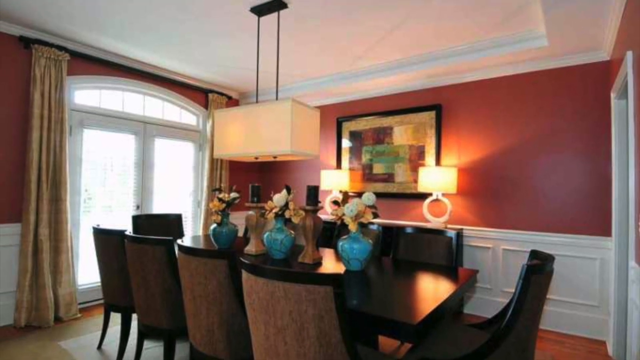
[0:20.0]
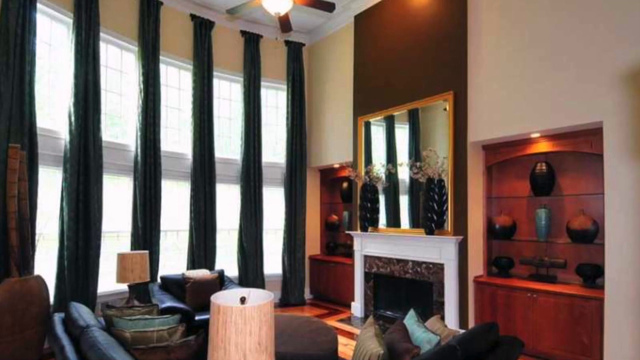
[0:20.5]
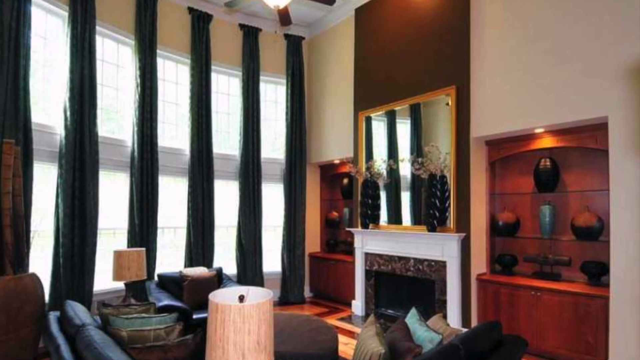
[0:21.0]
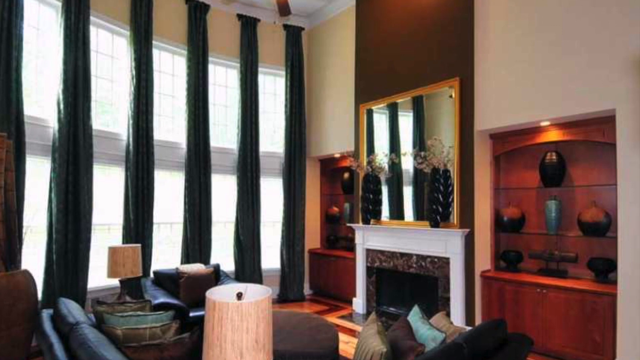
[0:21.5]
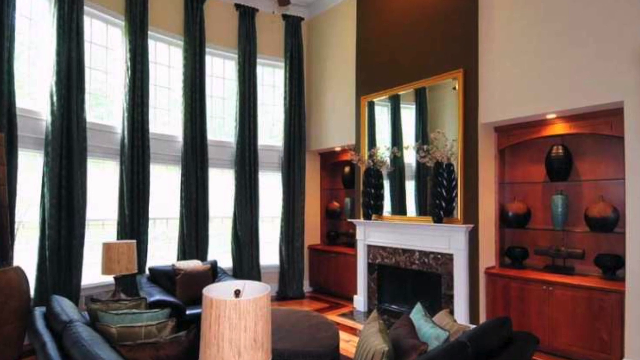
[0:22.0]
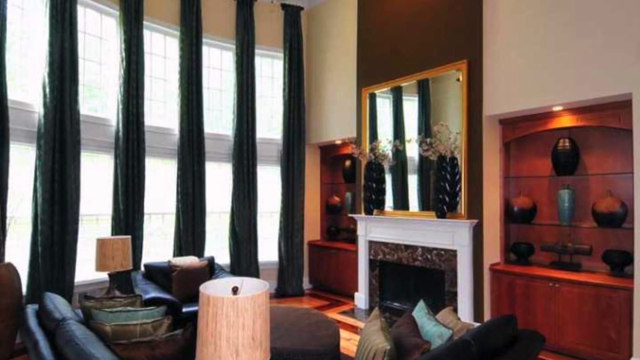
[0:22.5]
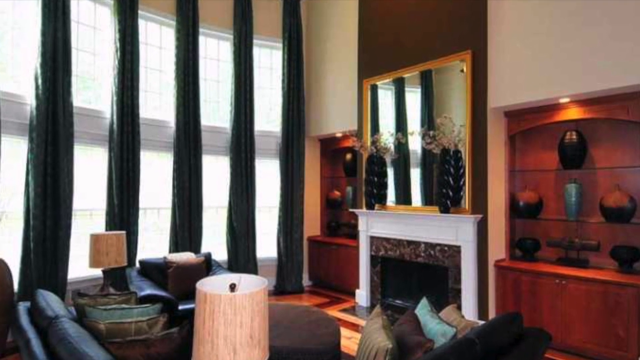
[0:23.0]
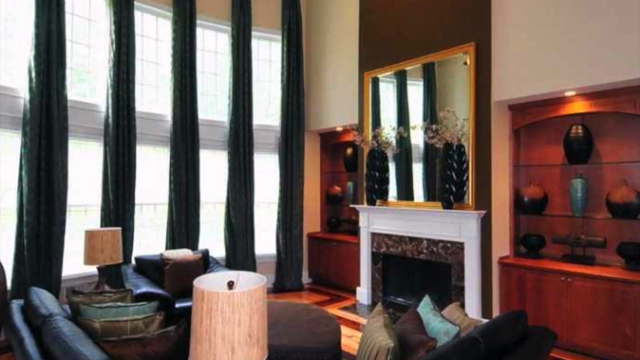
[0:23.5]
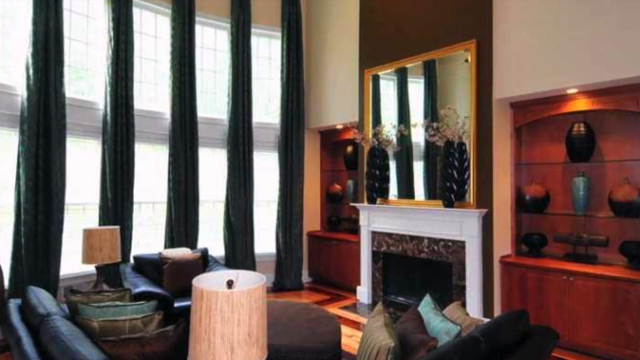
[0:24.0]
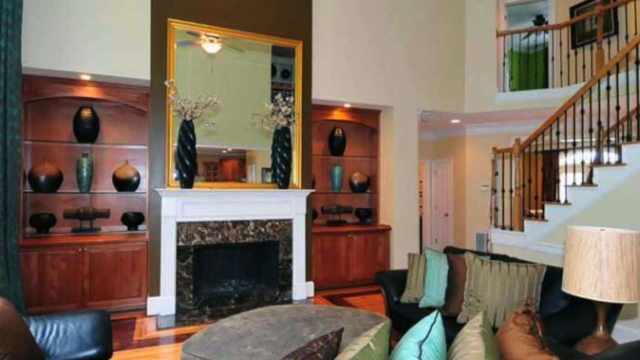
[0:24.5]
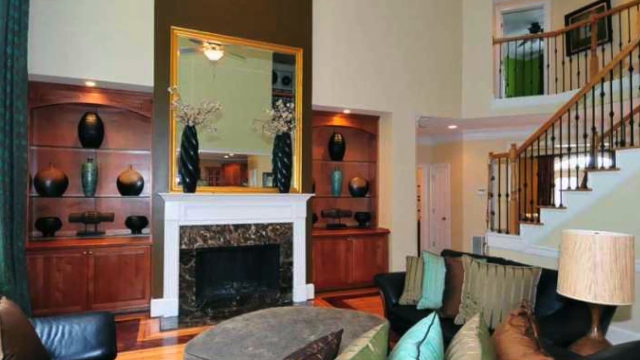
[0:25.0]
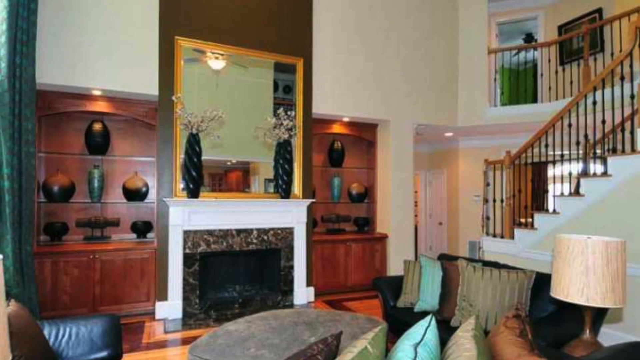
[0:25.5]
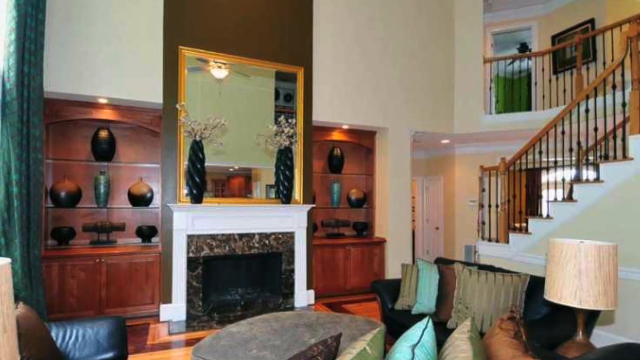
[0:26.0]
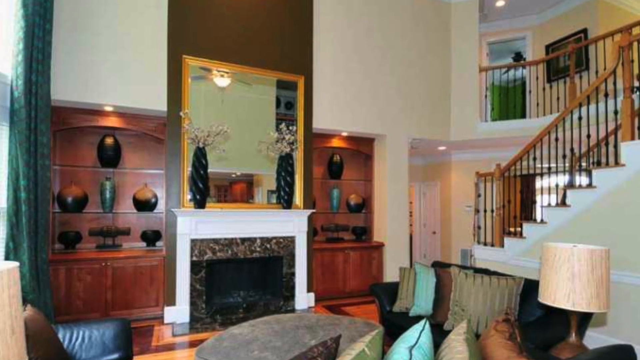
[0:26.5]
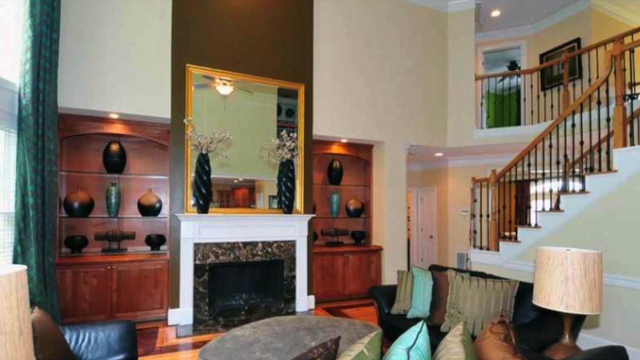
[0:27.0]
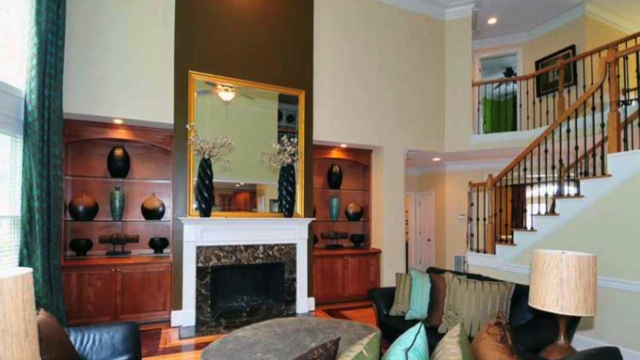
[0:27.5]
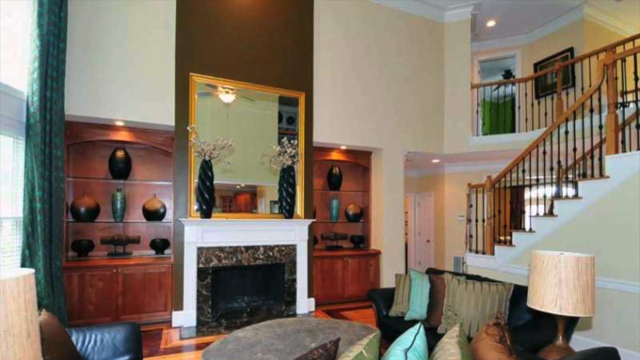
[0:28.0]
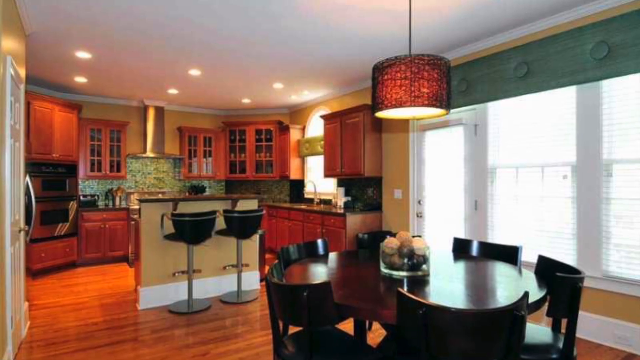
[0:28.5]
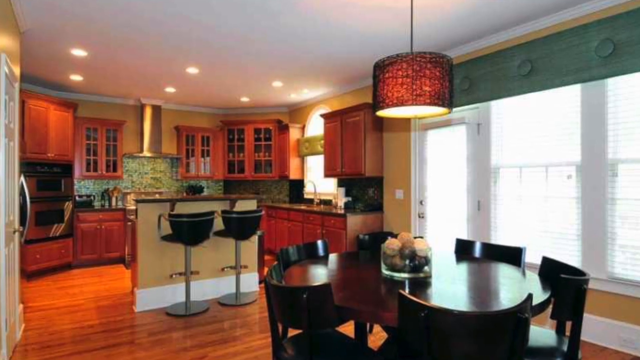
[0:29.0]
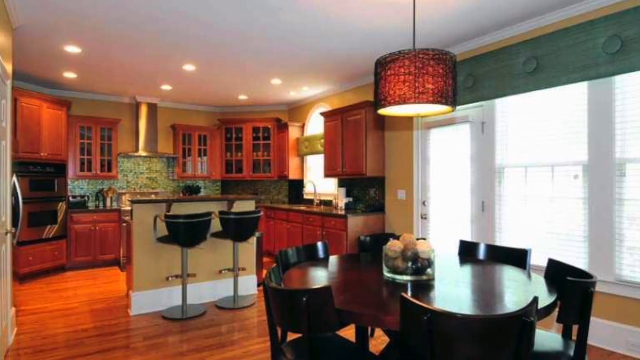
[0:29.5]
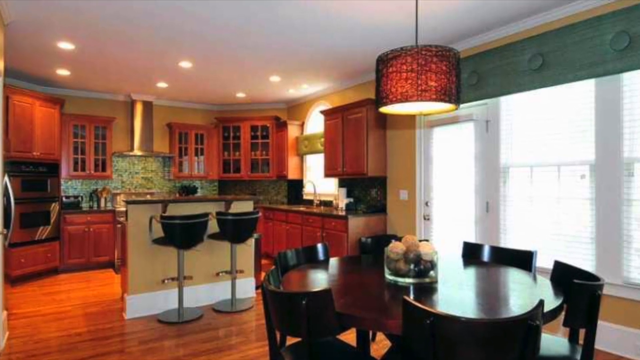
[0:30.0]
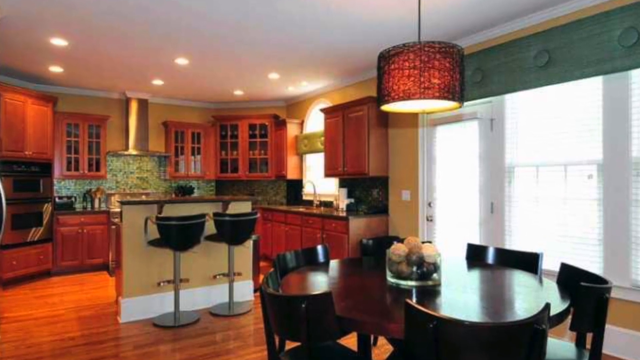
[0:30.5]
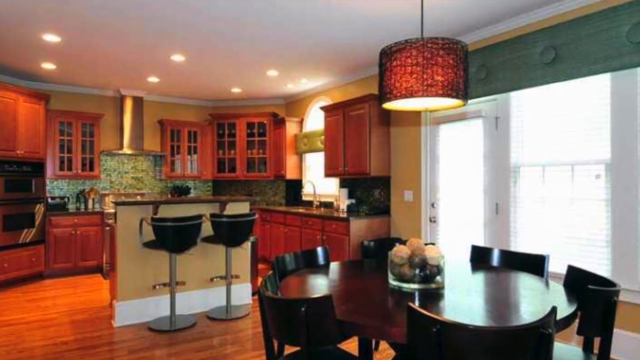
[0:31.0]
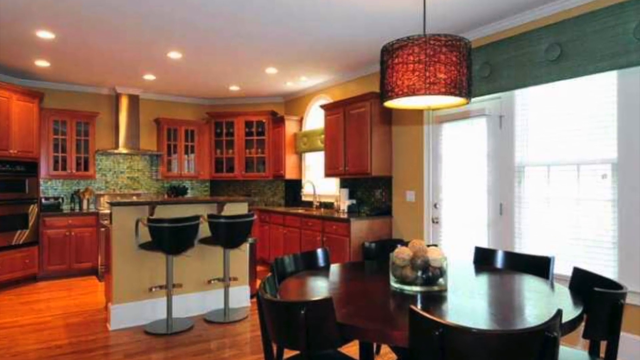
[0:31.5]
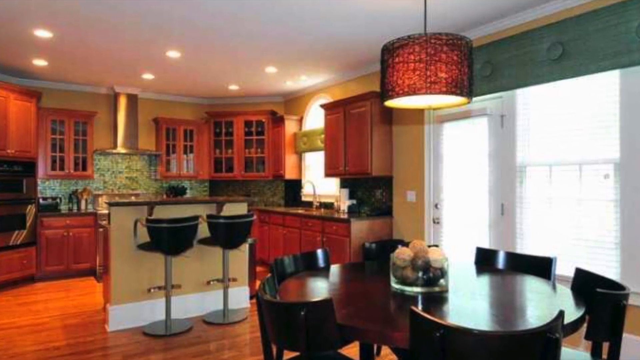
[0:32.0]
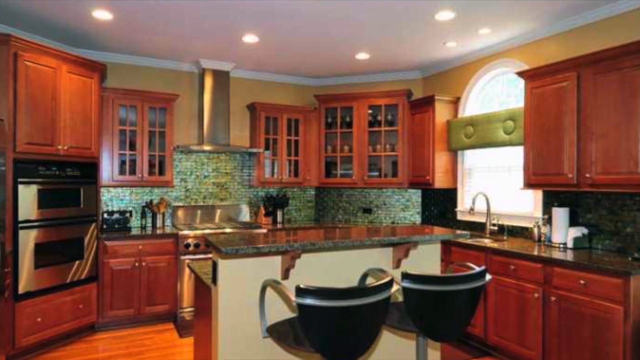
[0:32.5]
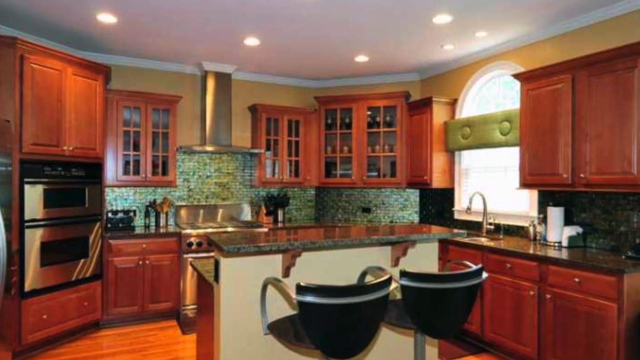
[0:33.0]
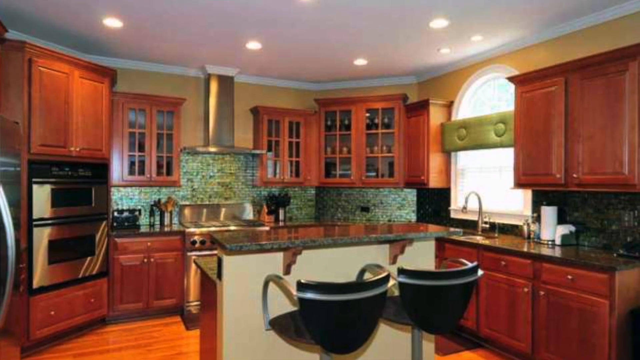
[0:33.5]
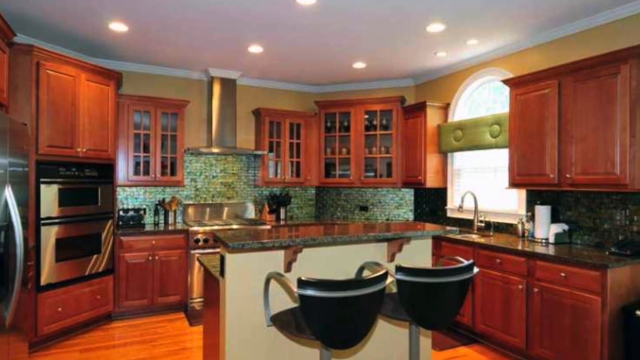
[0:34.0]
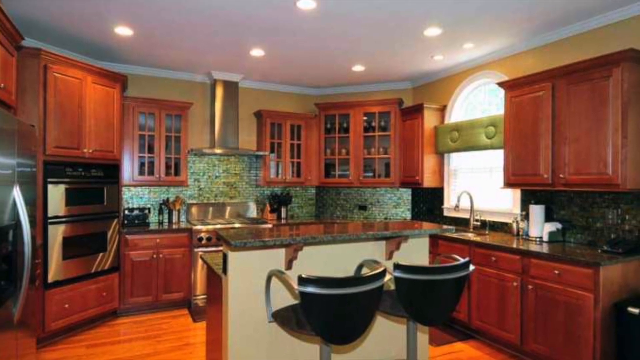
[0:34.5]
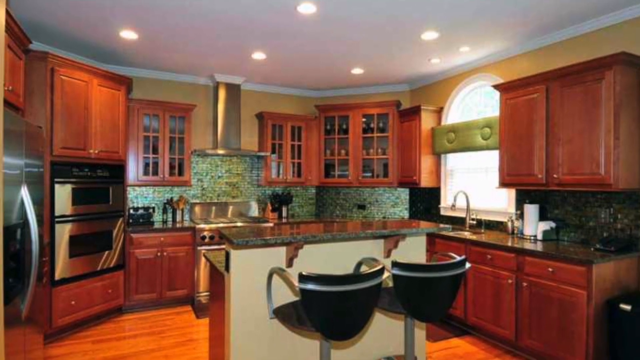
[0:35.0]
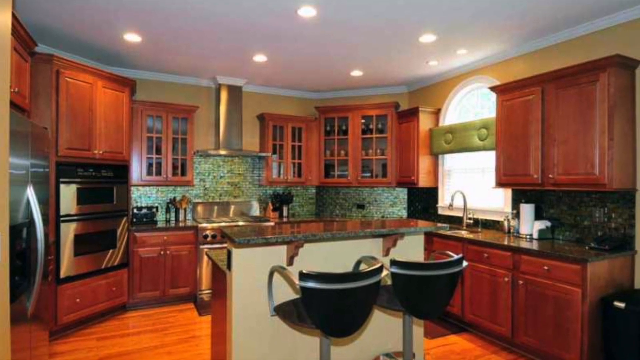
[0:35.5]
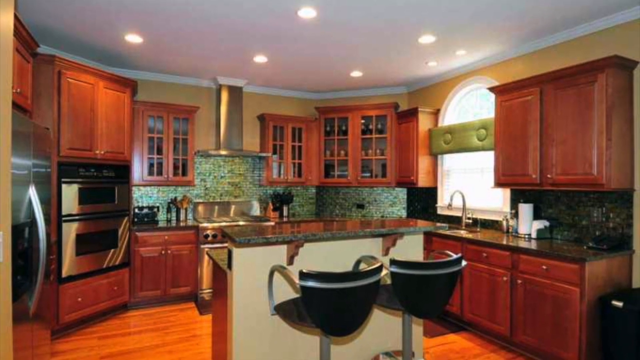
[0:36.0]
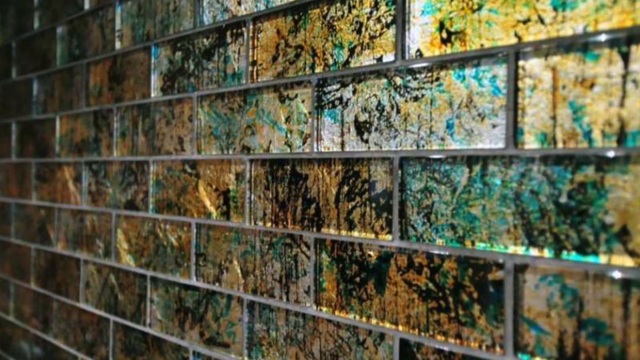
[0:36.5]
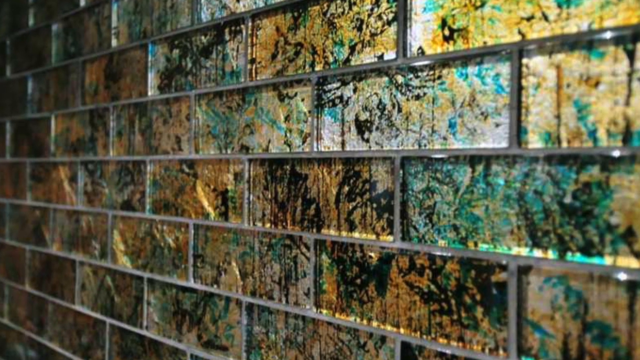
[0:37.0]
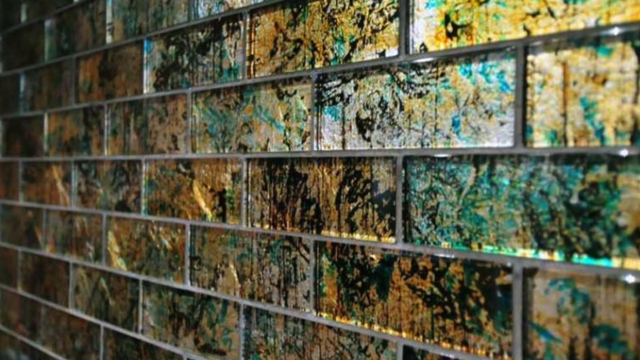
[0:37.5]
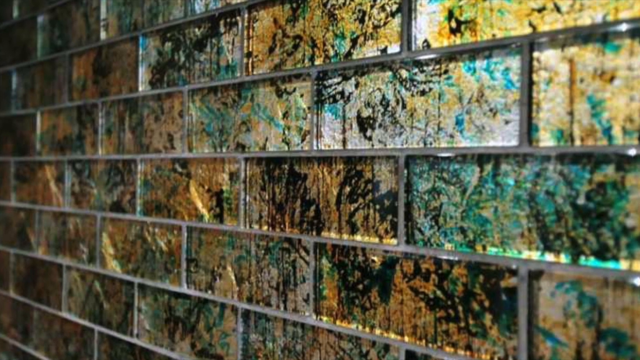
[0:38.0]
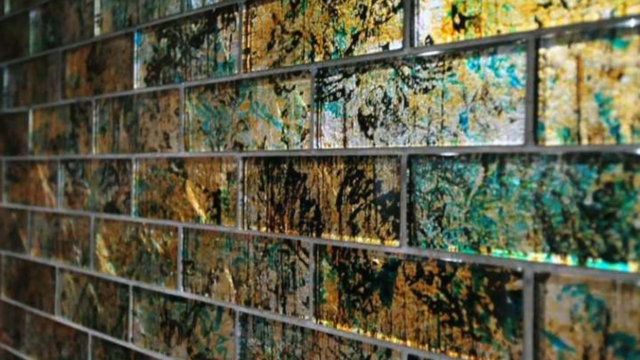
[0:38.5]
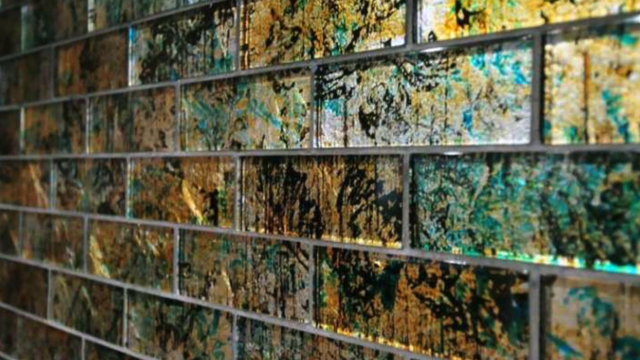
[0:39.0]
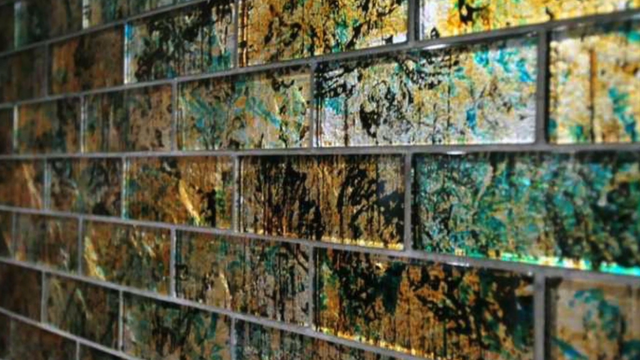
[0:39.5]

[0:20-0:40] Inside a dining room, there is a dark brown table with vases on it, and eight chairs of dark brown wood with tan cushions are arranged around it. Next is what appears to be a lounge with large high ceilings and very large double-stacked windows that have wide frames around them. The lounge also has a fireplace with a mirror on top of it and black couches. Another view of the same lounge shows the staircase going upstairs. The kitchen follows, with mahogany-colored wood cupboards, a round table, an island that has two bar stools, and appliances such as a silver oven, a stove and a double-door fridge.